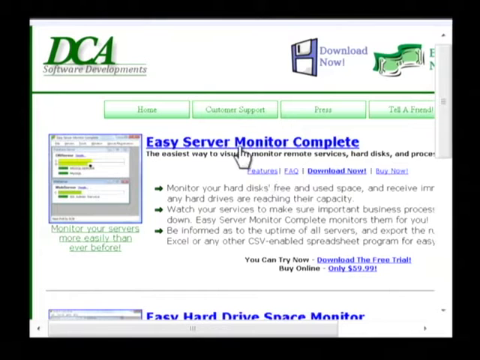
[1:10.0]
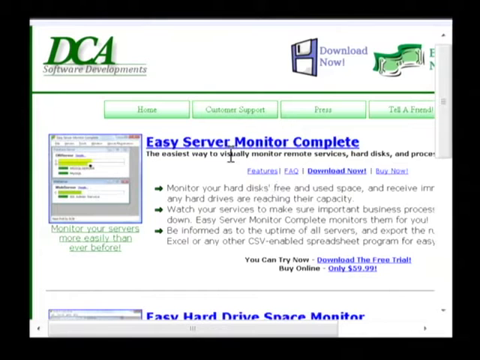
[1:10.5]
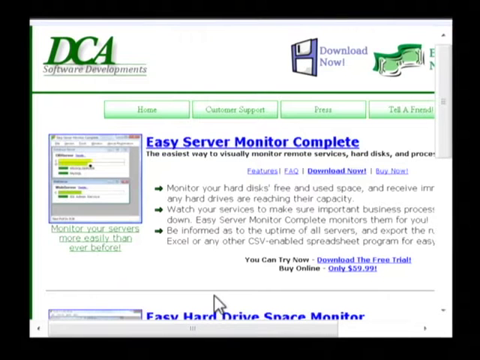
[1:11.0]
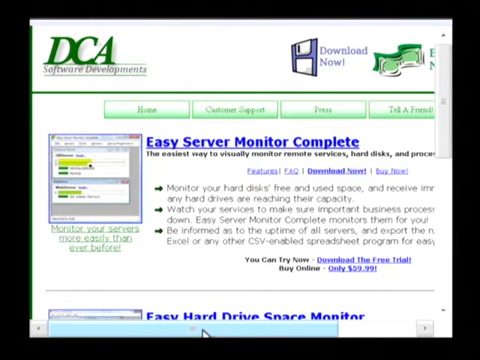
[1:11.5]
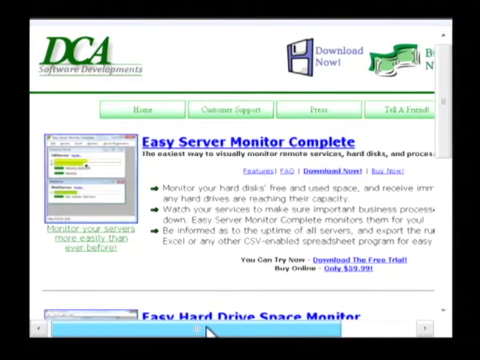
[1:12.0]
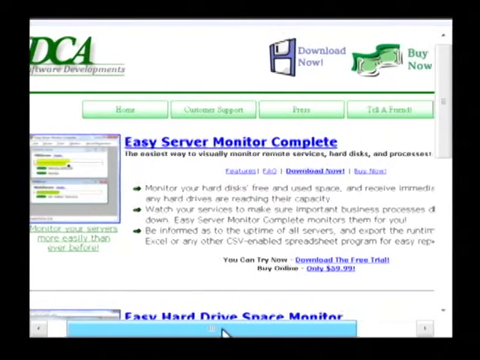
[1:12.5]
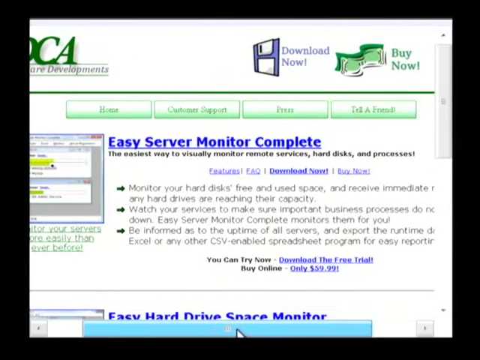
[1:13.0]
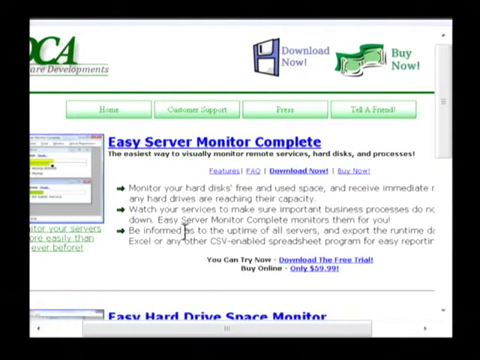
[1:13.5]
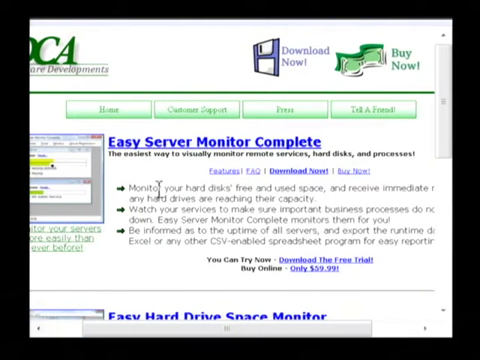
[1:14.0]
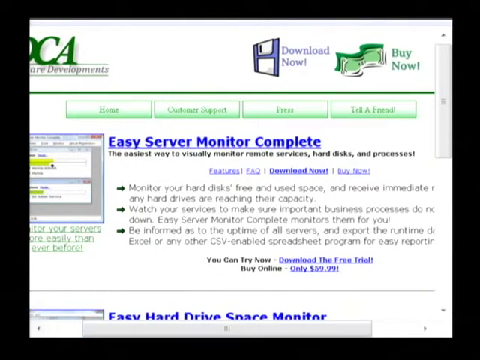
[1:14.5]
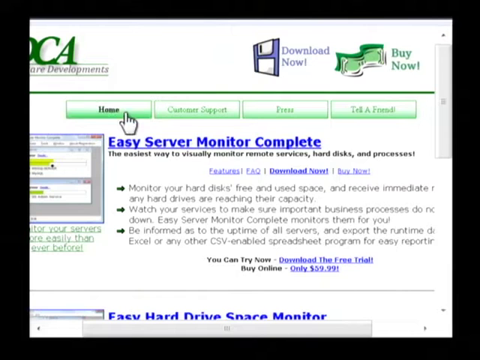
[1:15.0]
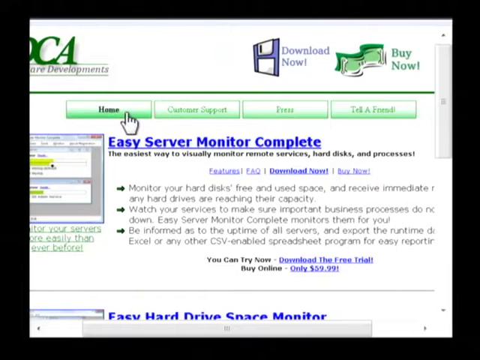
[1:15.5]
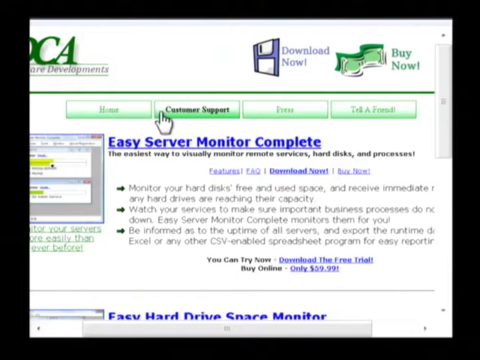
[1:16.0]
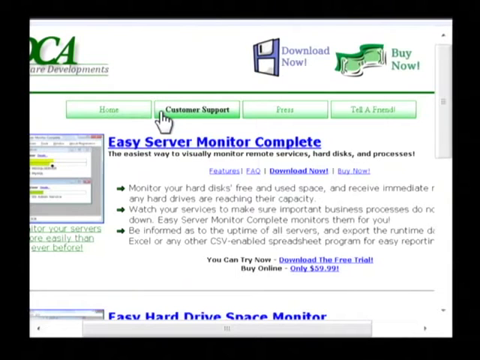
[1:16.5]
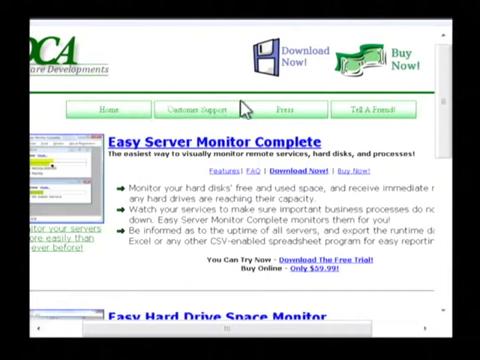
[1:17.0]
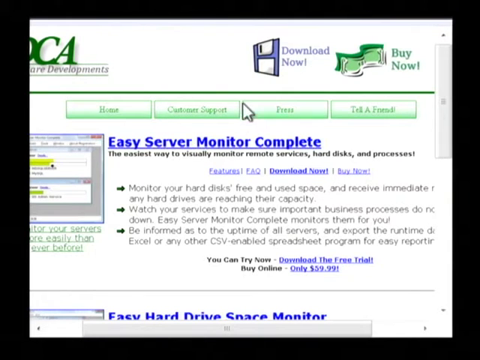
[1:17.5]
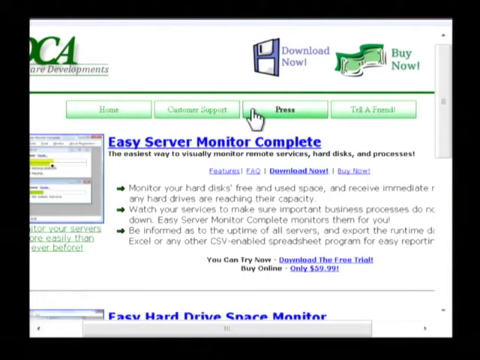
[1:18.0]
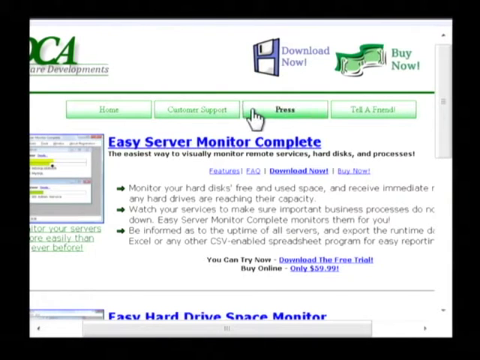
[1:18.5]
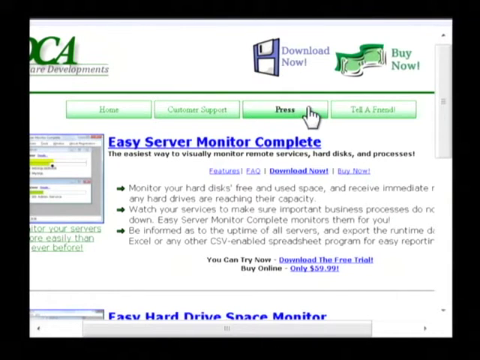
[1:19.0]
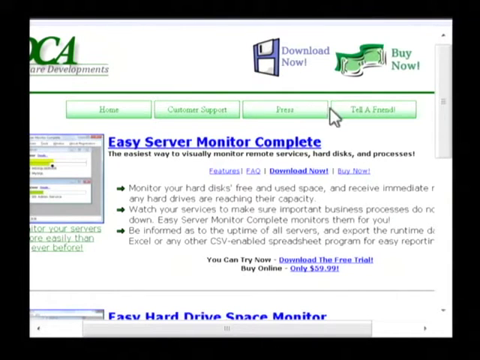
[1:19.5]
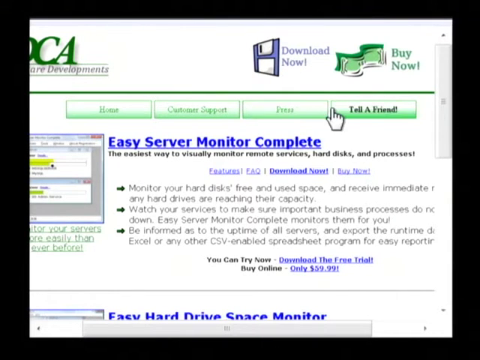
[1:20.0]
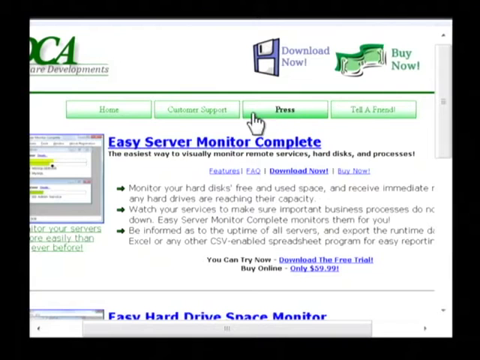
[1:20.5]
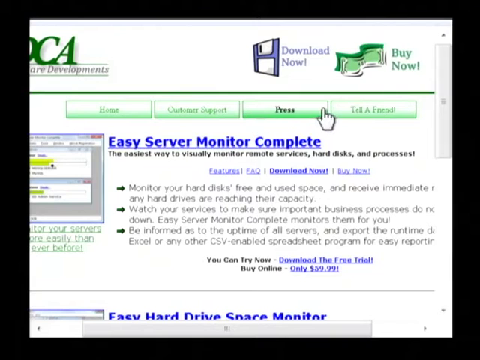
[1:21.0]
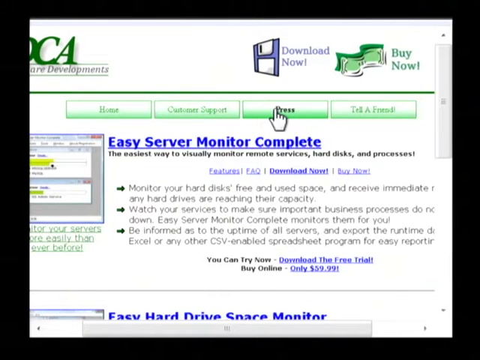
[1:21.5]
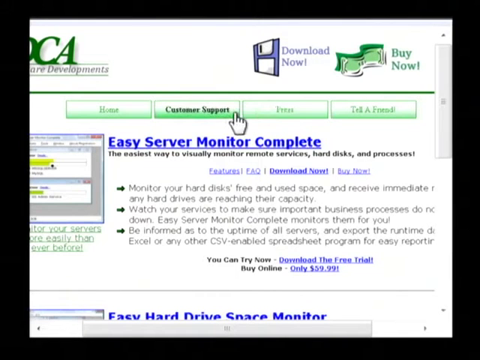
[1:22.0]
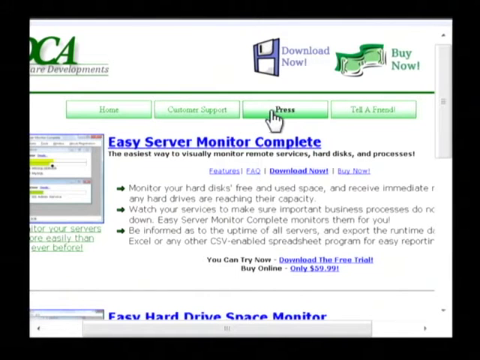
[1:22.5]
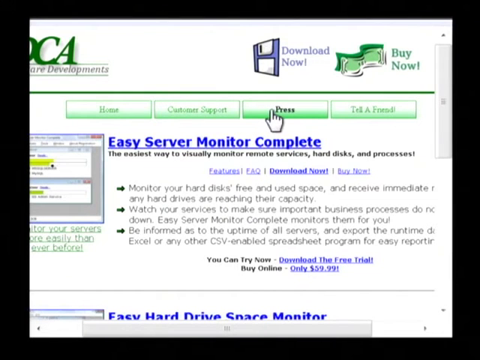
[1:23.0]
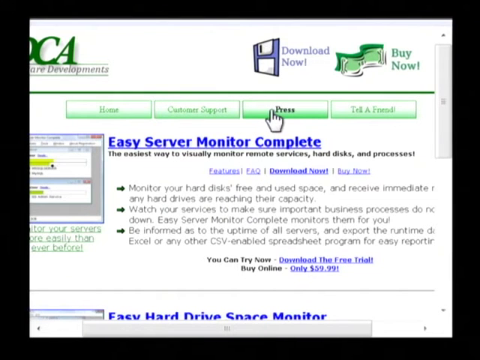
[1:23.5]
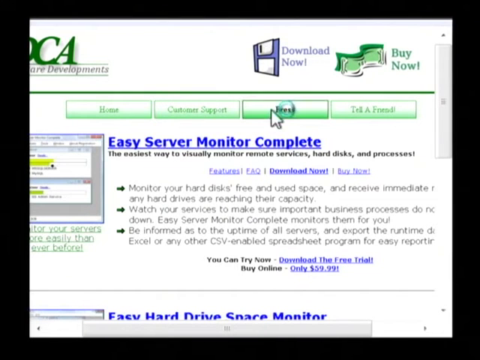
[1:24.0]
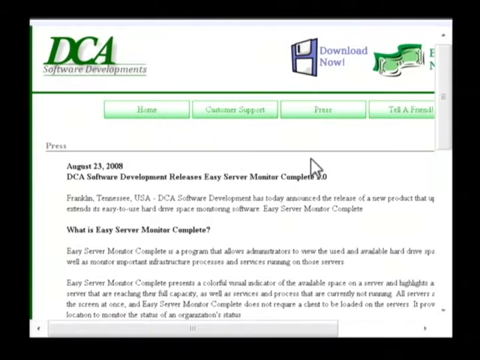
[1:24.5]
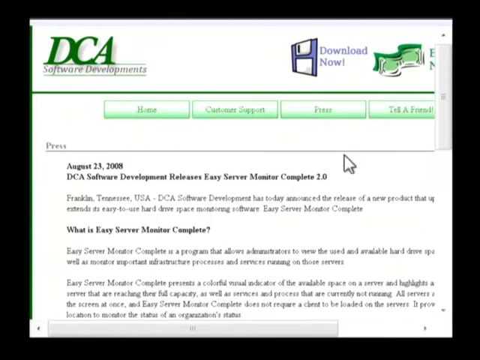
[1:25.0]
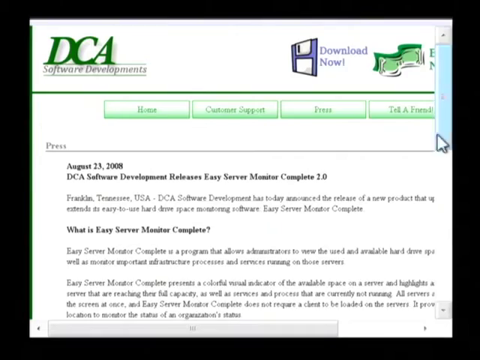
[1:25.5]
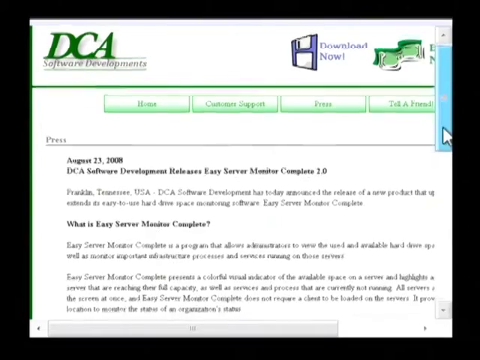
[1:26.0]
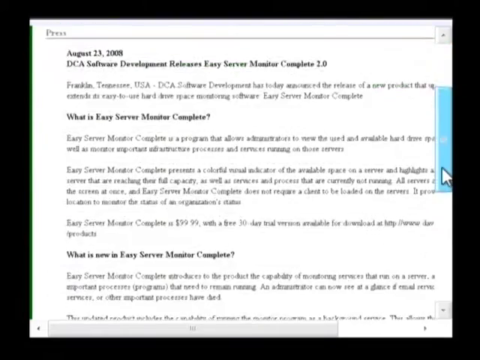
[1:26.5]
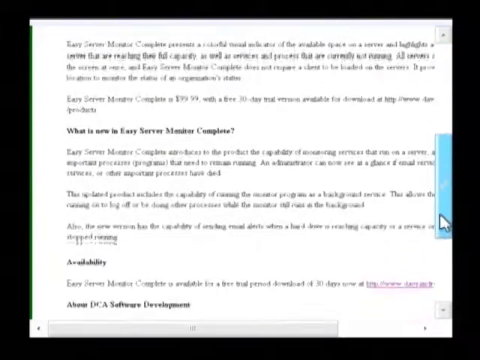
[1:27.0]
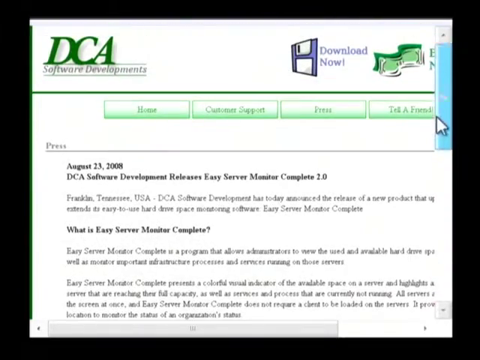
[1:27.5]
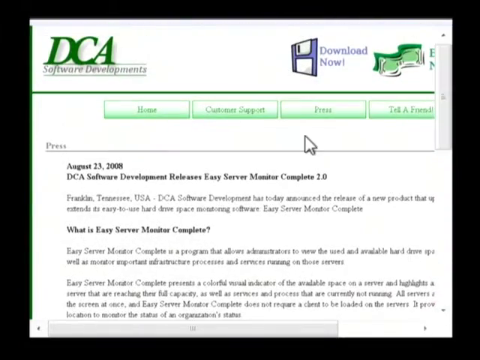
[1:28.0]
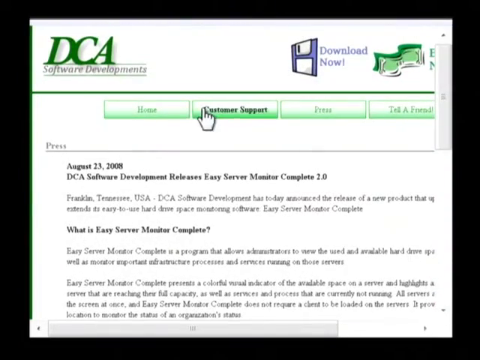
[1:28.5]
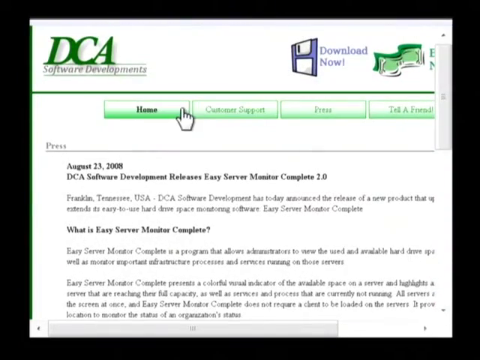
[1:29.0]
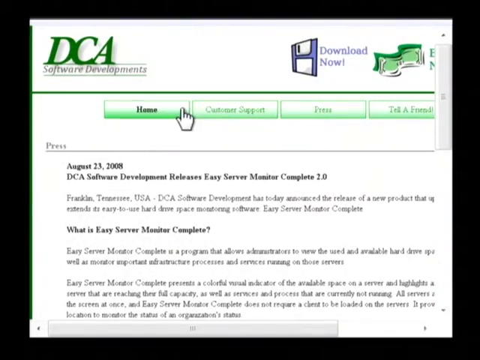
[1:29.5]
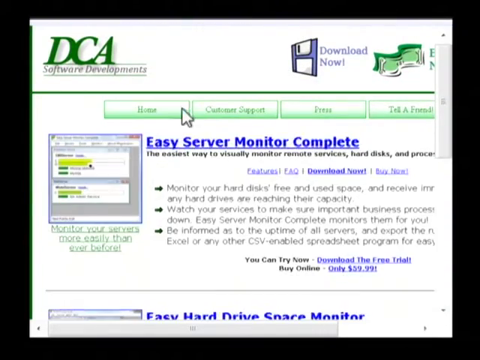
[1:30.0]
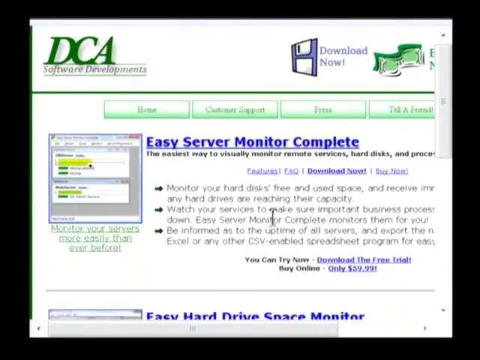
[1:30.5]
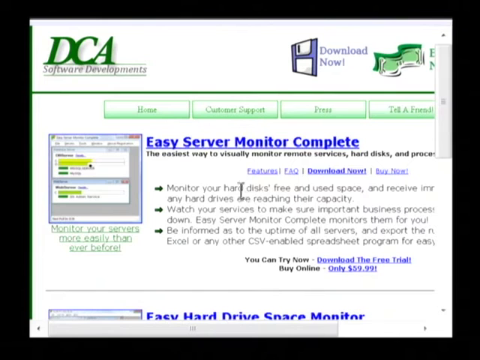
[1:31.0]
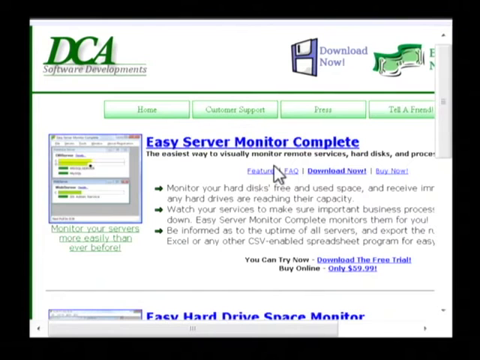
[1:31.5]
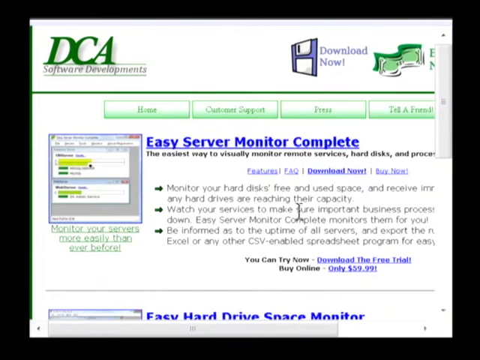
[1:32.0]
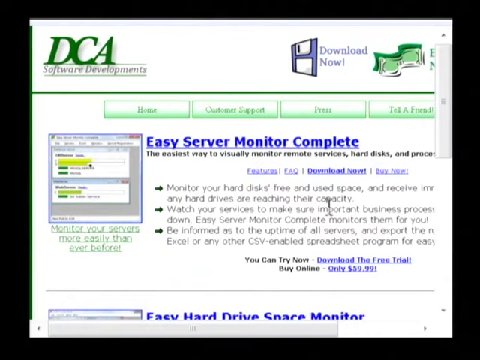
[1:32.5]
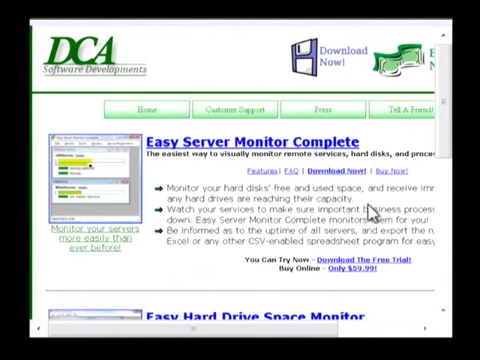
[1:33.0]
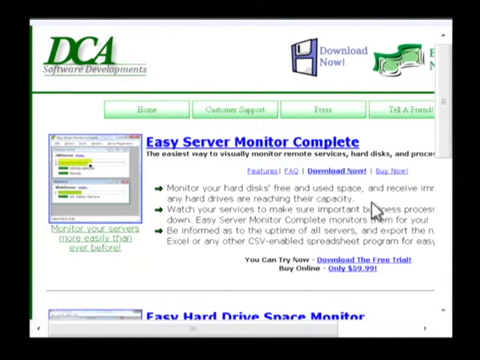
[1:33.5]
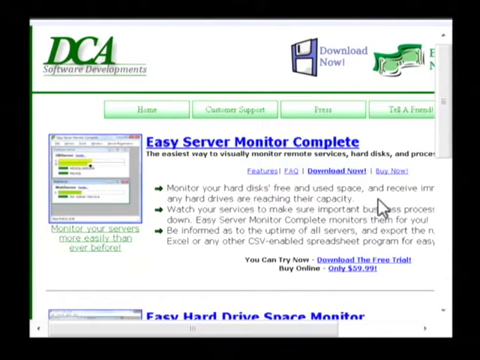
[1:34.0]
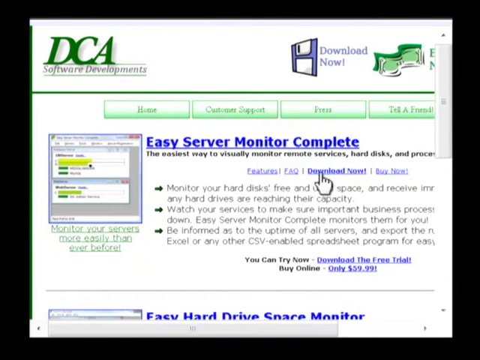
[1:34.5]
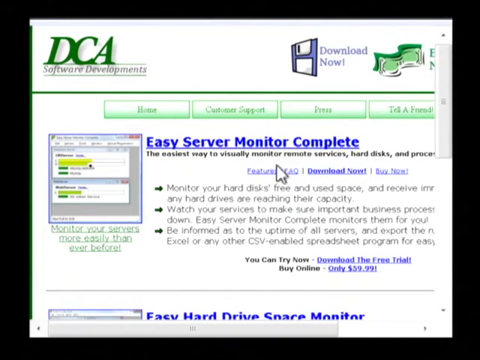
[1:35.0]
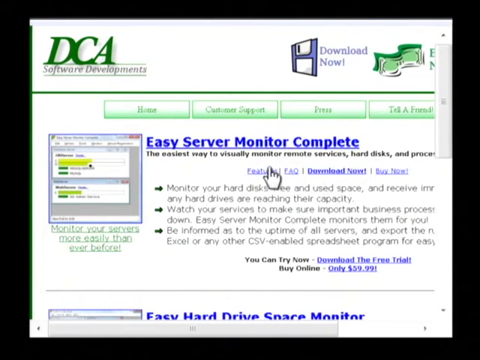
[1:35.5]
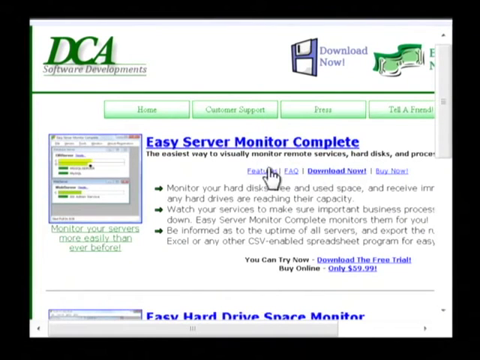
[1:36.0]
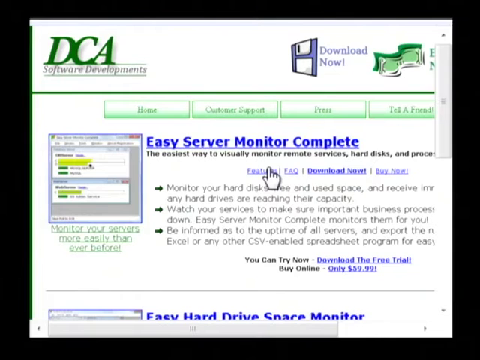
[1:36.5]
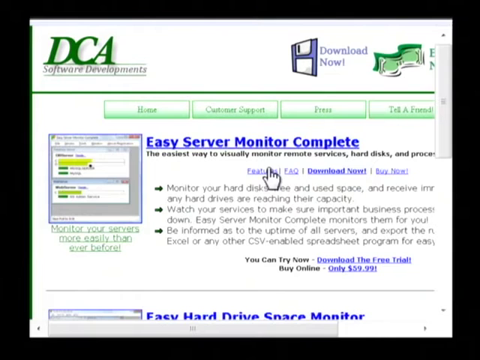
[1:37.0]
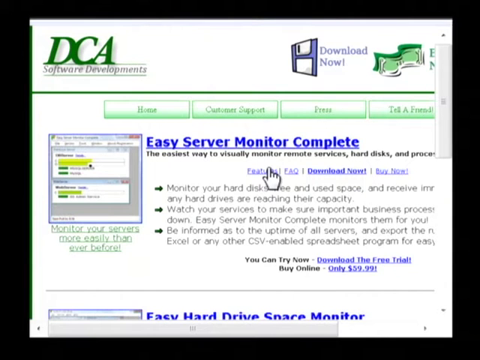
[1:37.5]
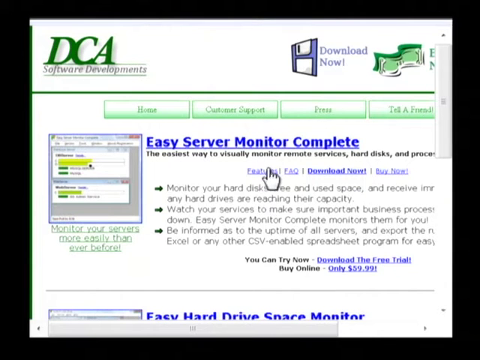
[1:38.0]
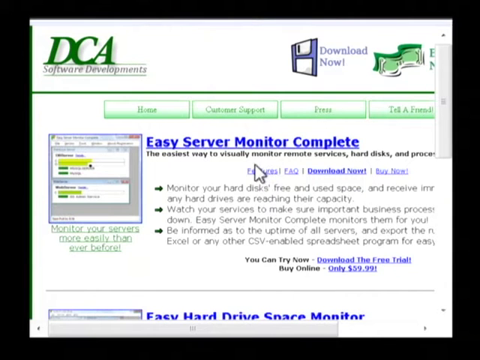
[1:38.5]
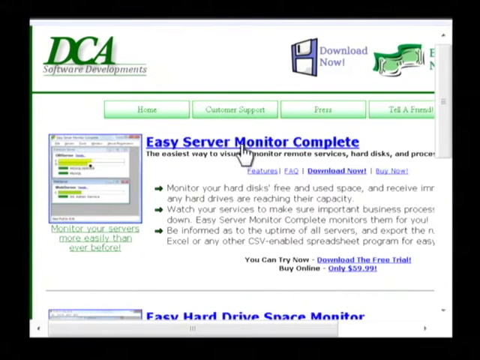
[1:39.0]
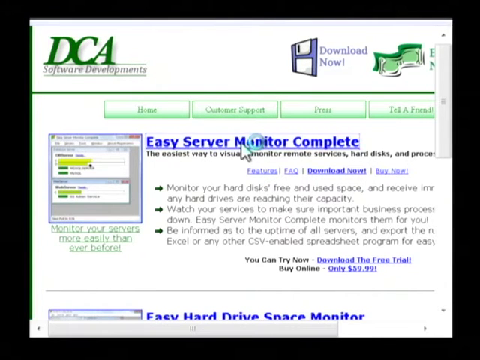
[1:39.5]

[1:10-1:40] A page with a white background shows "DCA" in green writing, with "software development" in grey writing underneath, underlined at the top and bottom. On the right-hand side is "download now" with a desk icon. Below that, a green line runs all the way across the page, and underneath are "home", "customer support", "press" and "tell a friend", each in its own tab box. Then comes "easy server monitor complete" in blue writing with a blue underline. He hovers the mouse over that section, then goes to the bottom of the page and uses the scroll bar to pull the page to the right a little. He goes up to the top, hovers the mouse over the "press" tab and clicks it, which opens a different press page with the title "August 23rd 2008". He goes to the right-hand side of the page and pulls the bar down to scroll, then goes back to the top of the page and clicks home.